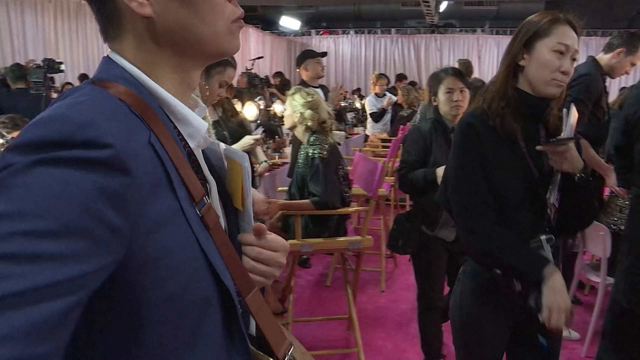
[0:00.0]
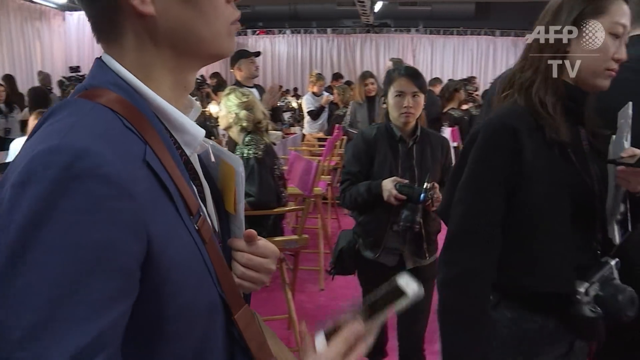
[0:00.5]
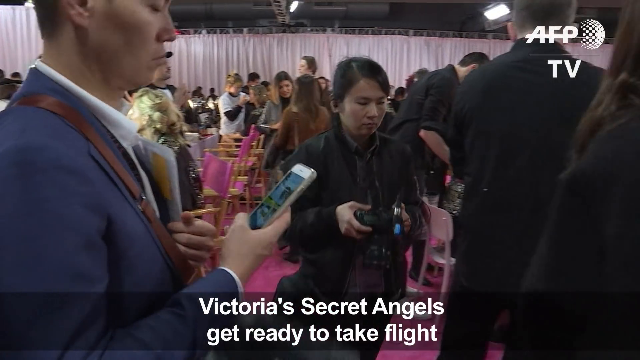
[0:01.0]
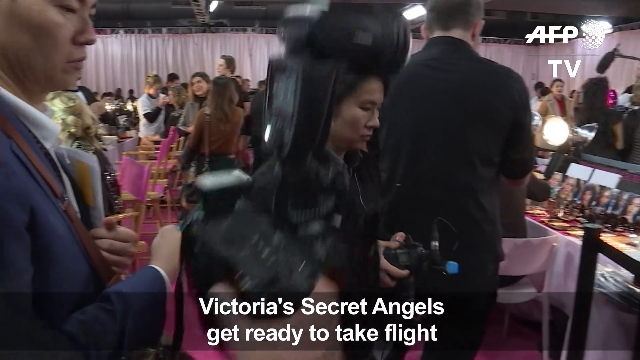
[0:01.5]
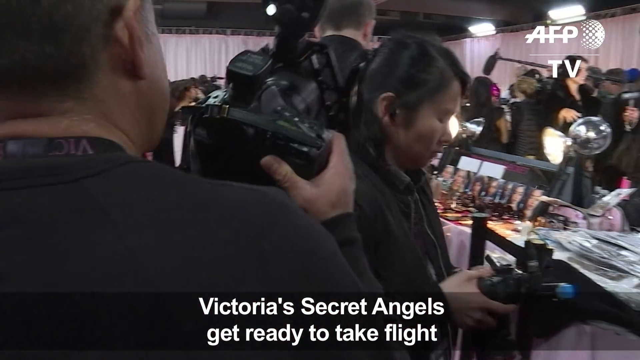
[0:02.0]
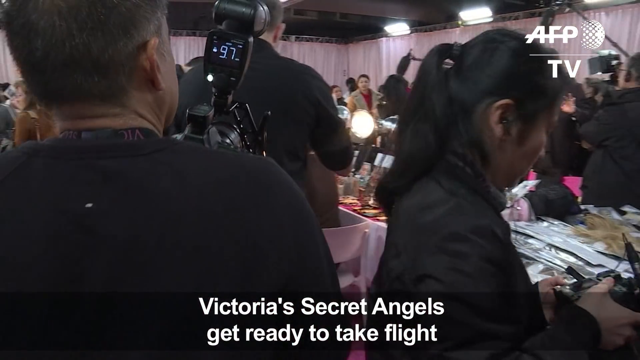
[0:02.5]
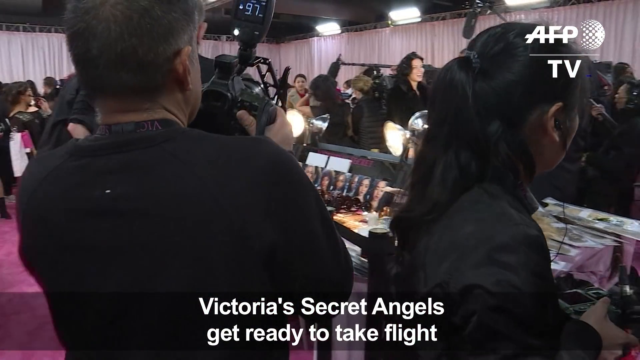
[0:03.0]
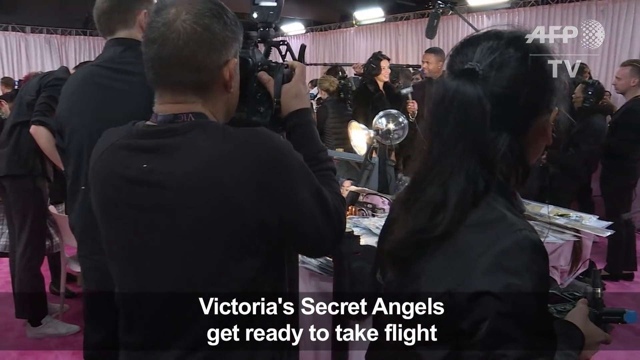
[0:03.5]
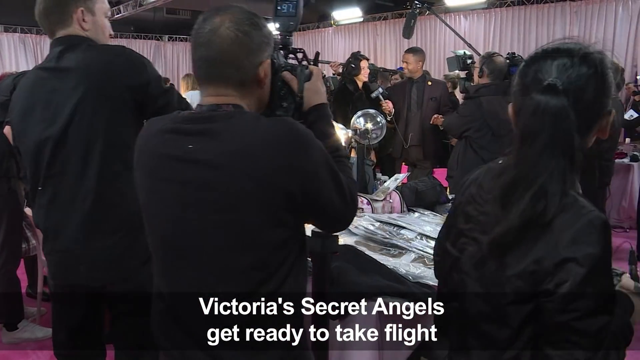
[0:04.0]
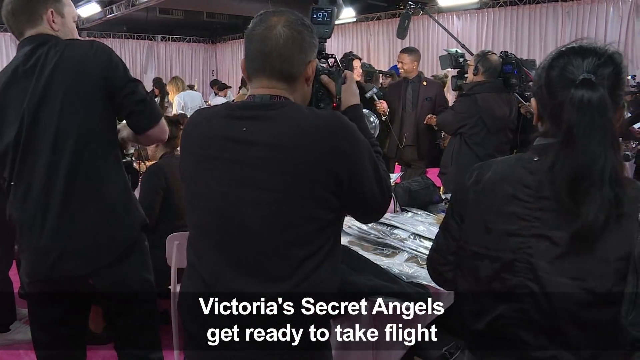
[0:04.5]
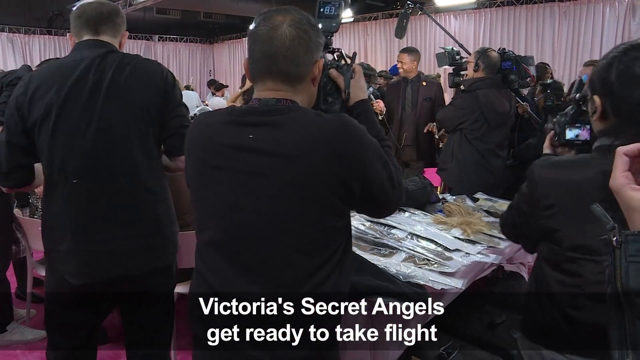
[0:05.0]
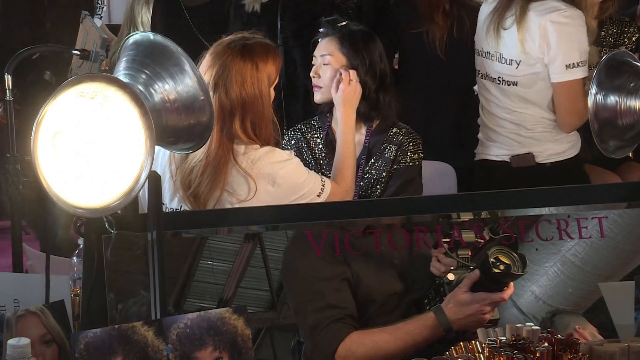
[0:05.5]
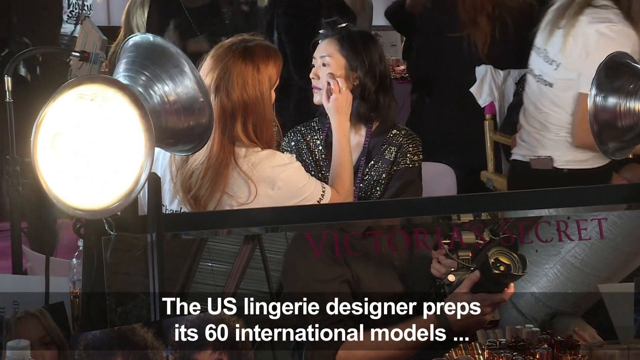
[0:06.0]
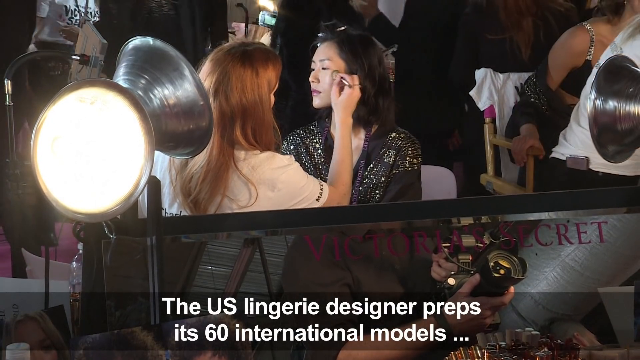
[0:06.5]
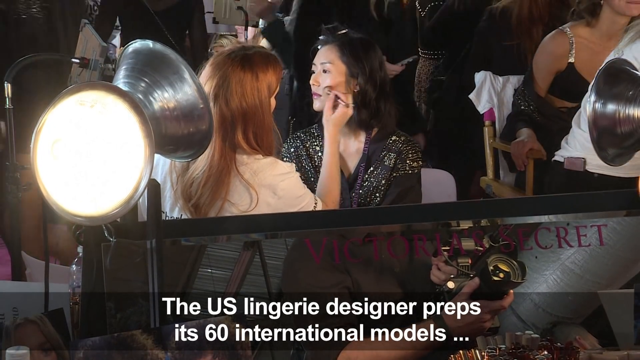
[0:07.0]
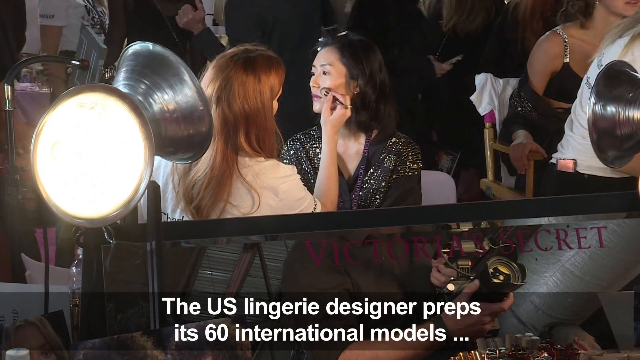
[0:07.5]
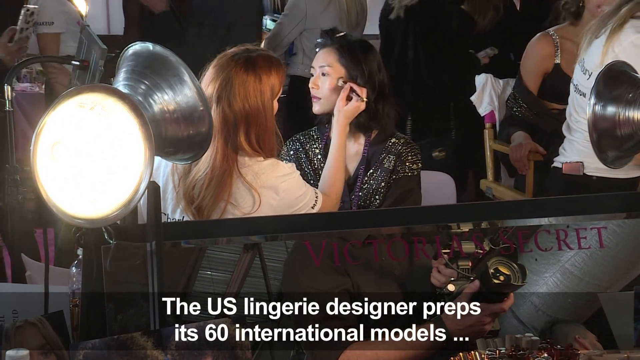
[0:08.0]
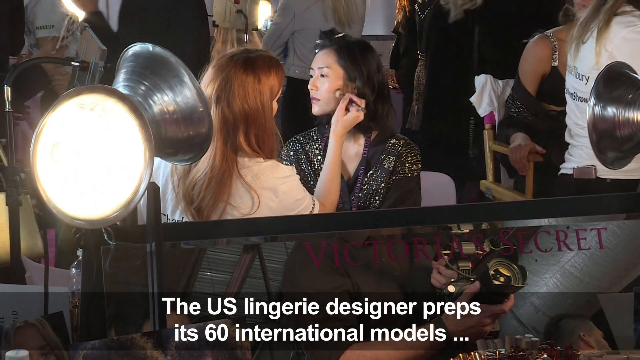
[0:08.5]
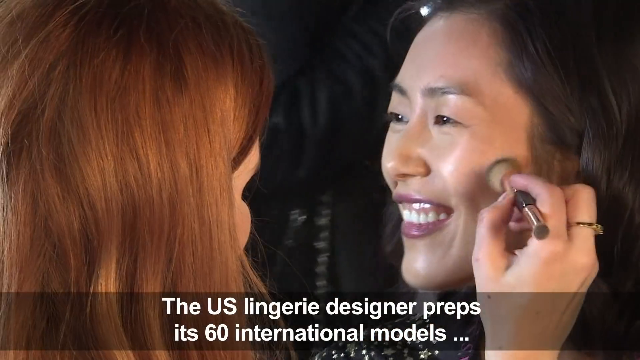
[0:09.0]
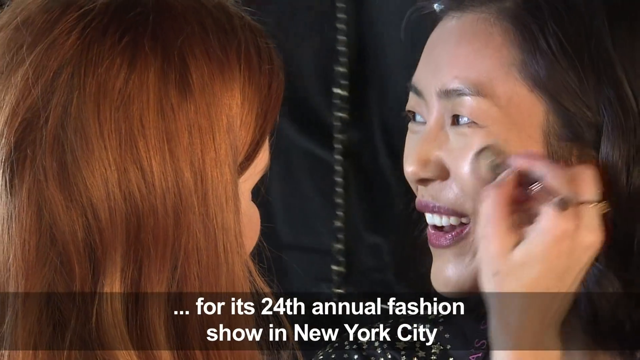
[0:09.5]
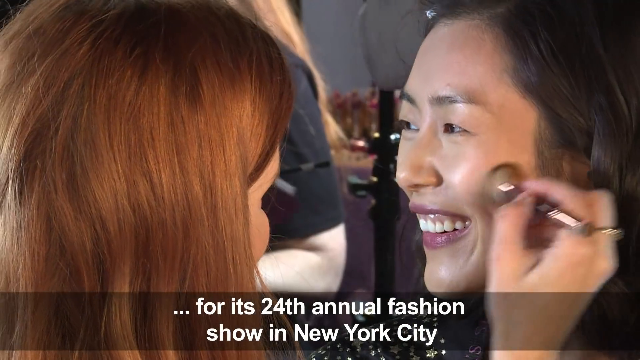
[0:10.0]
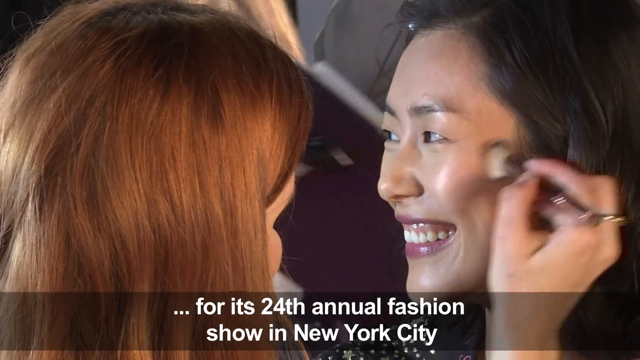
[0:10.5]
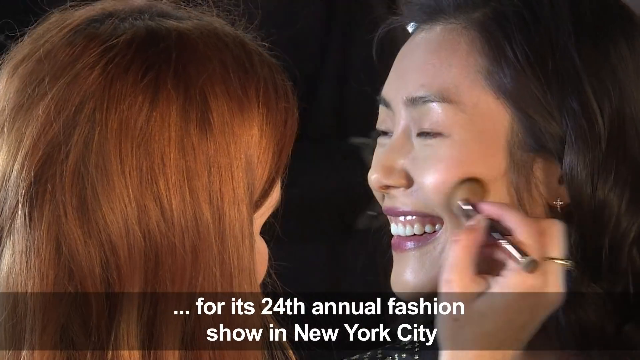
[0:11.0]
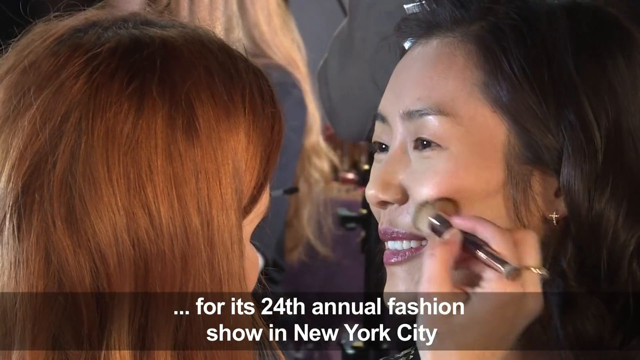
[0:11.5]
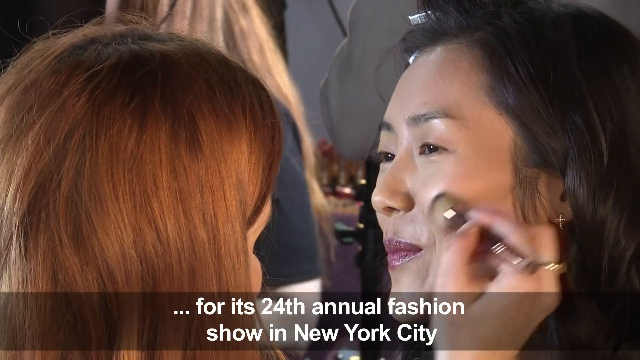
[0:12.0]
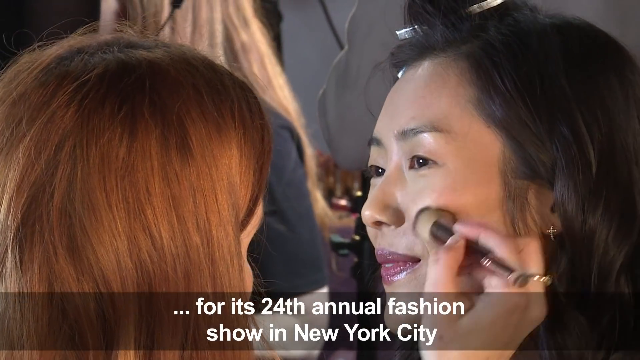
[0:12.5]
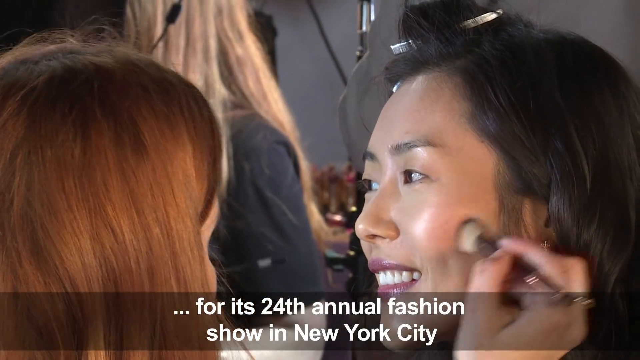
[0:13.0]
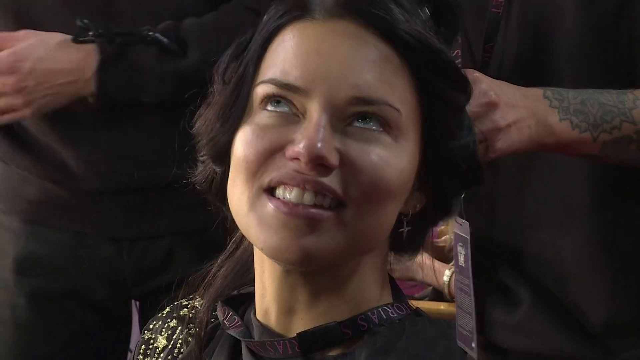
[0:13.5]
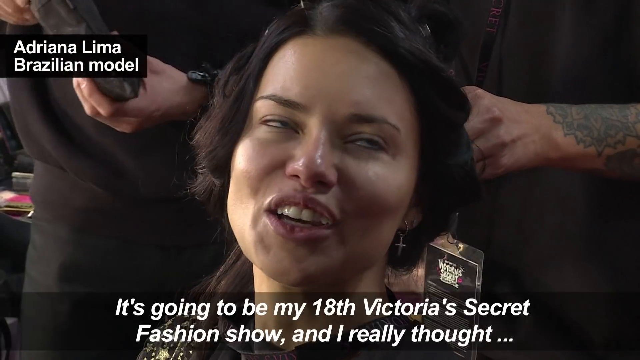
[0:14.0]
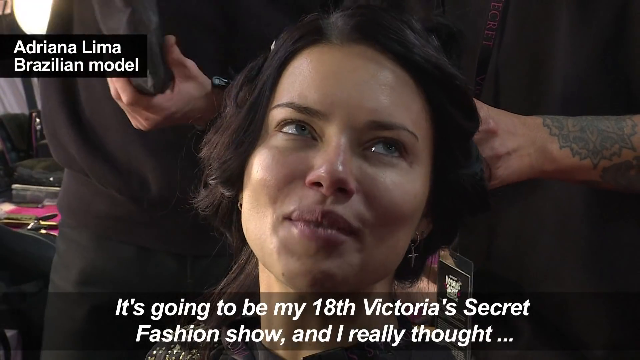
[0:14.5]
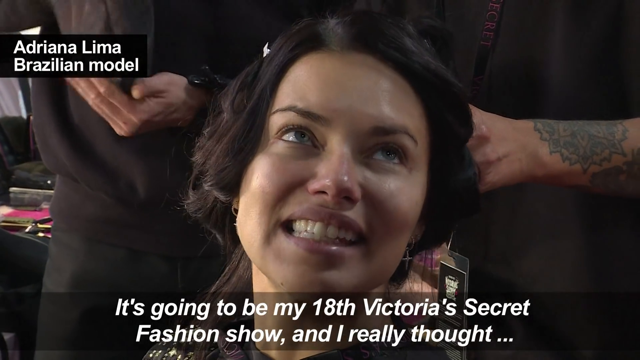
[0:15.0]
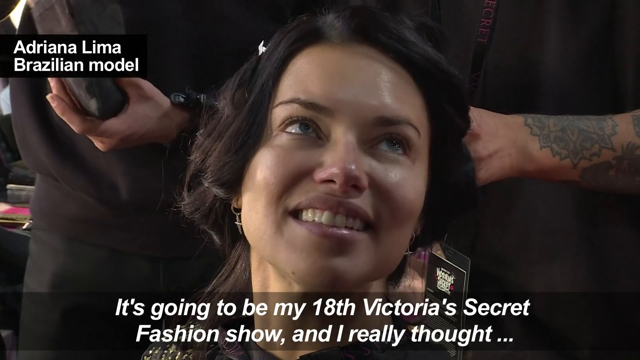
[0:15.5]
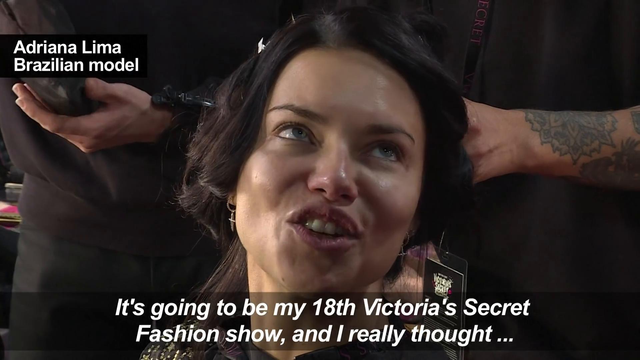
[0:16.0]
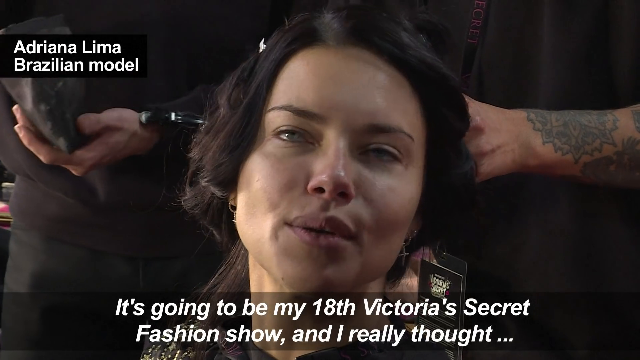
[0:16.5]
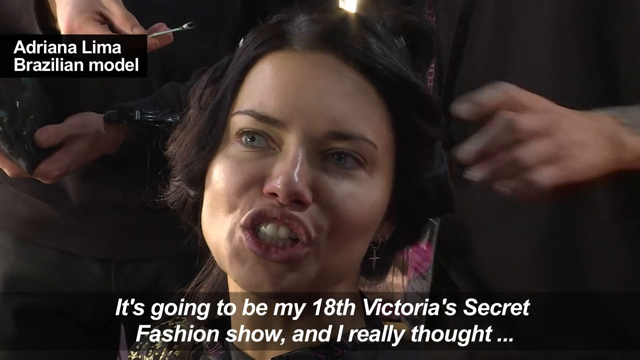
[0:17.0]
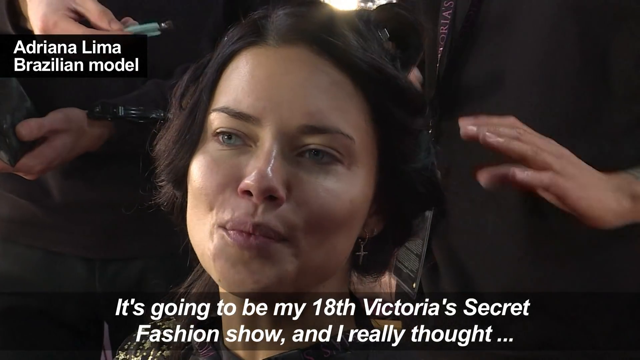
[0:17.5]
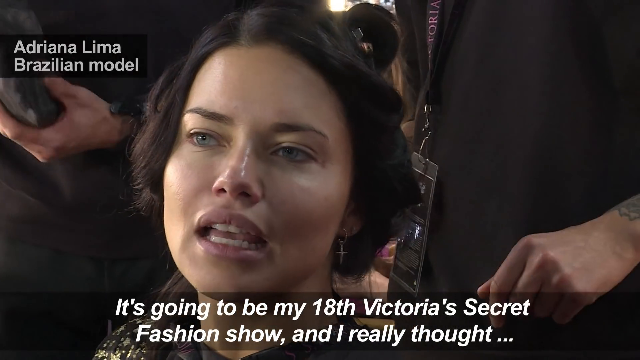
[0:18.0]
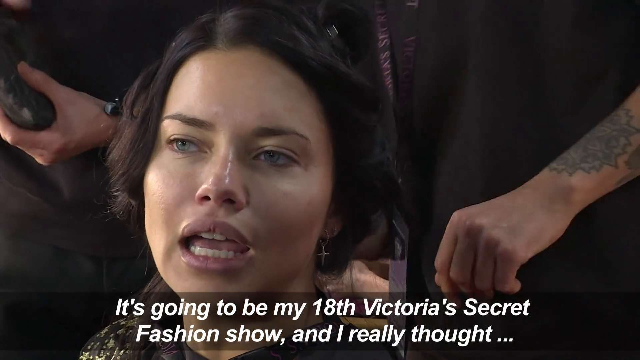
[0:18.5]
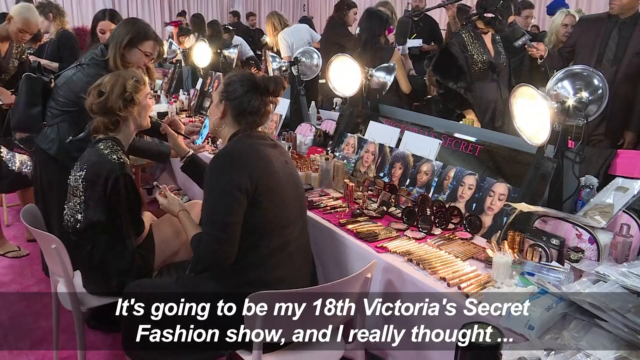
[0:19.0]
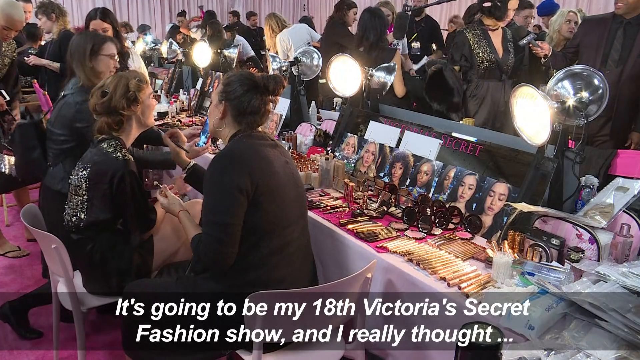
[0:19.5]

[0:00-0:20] A large group of Korean people is gathered at a conference dinner; some are standing and some are sitting down, and they seem to be walking around. There are wooden chairs covered in pink, the floor is pink, and the walls are white curtains. Text reads "Victoria's Secret Angels, get ready to take a flight" along with "AFP TV". Journalists are there too, carrying cameras and microphones. One Korean model is having her makeup done. Text states that the U.S. lingerie designer preps 60 international models for its 24th annual fashion show in New York City. A group of young women are having their makeup done, and a subtitle reads "It's going to be my 18th Victoria's Secret fashion show."